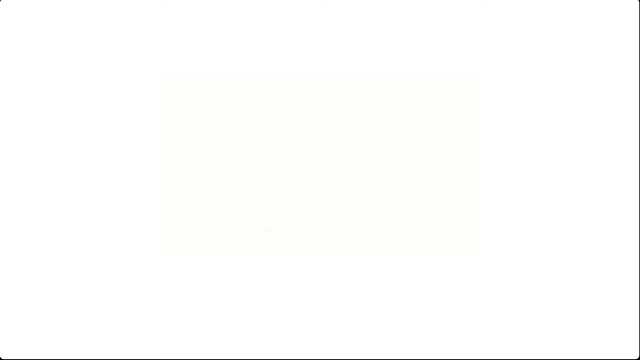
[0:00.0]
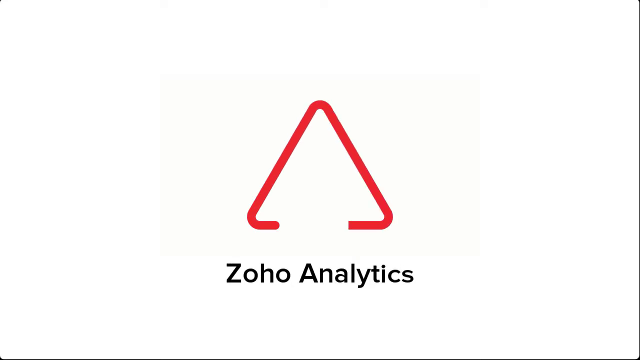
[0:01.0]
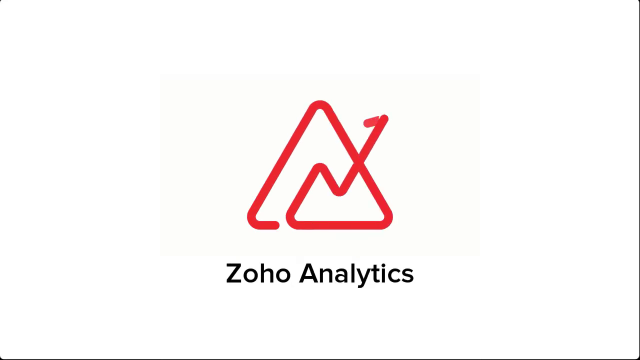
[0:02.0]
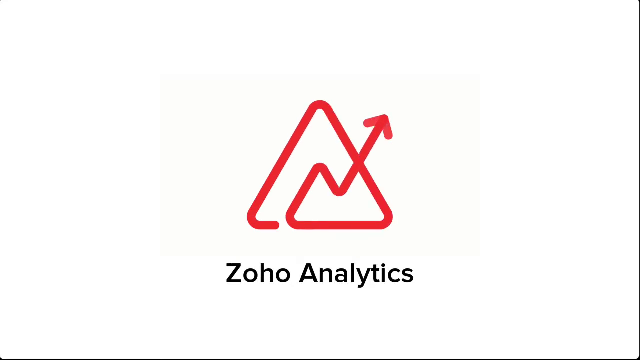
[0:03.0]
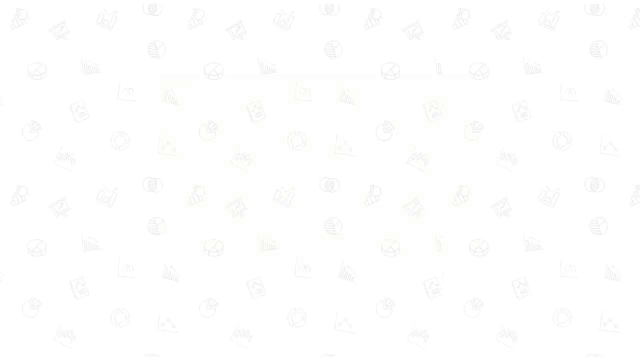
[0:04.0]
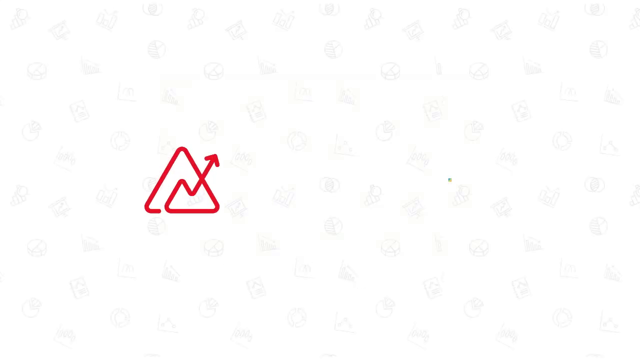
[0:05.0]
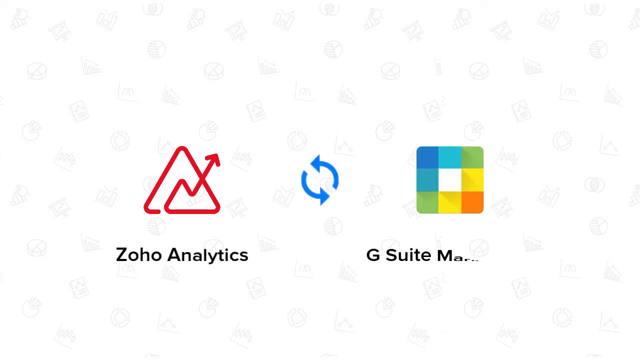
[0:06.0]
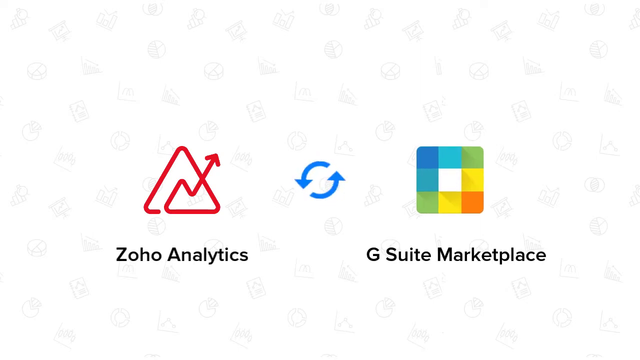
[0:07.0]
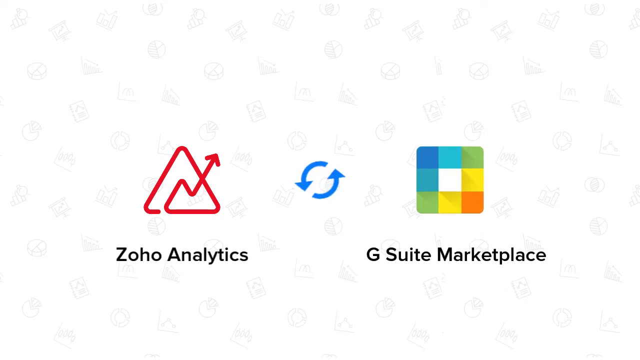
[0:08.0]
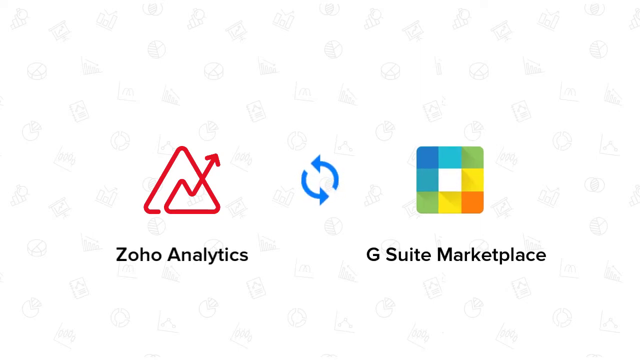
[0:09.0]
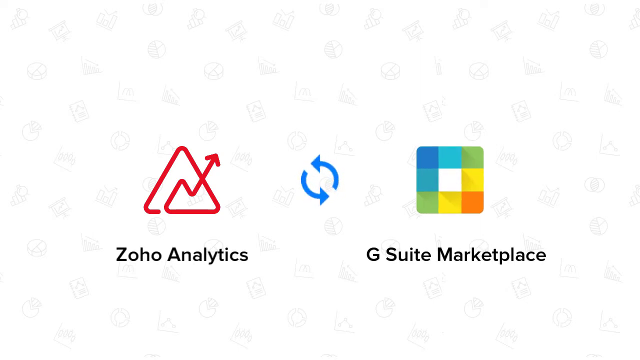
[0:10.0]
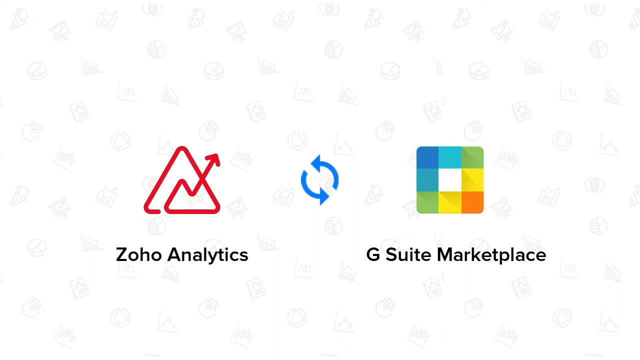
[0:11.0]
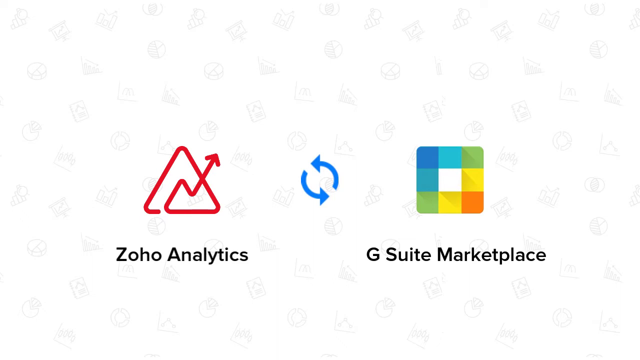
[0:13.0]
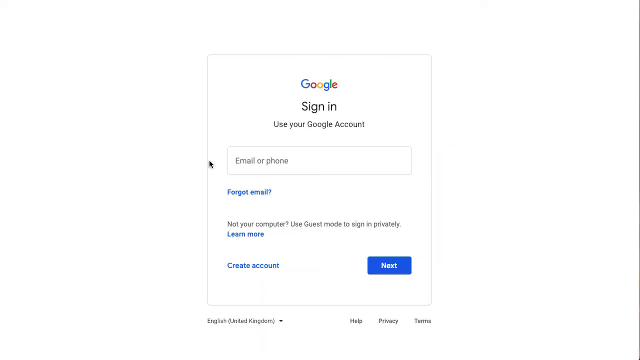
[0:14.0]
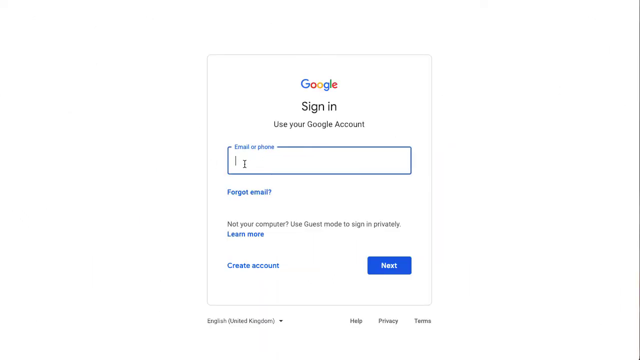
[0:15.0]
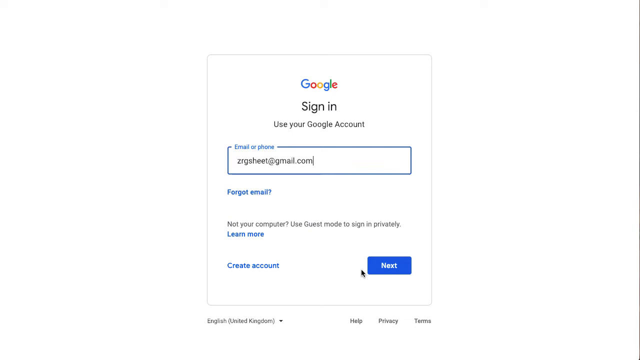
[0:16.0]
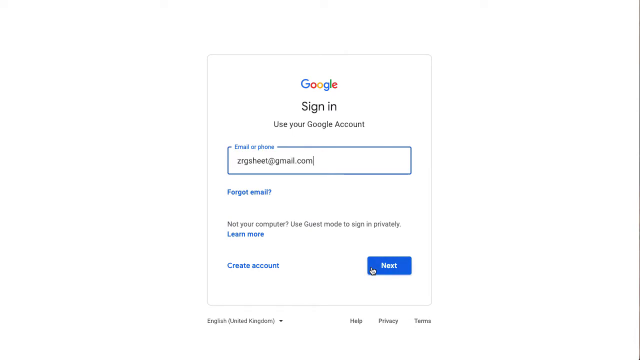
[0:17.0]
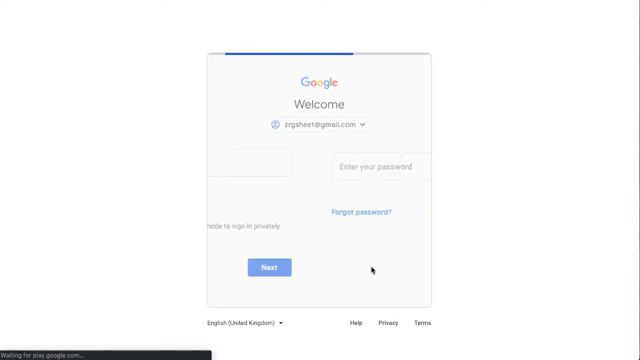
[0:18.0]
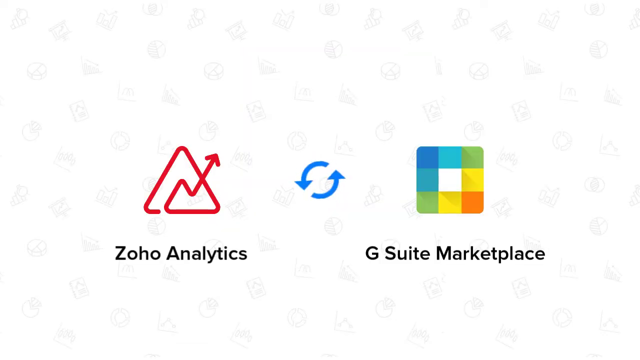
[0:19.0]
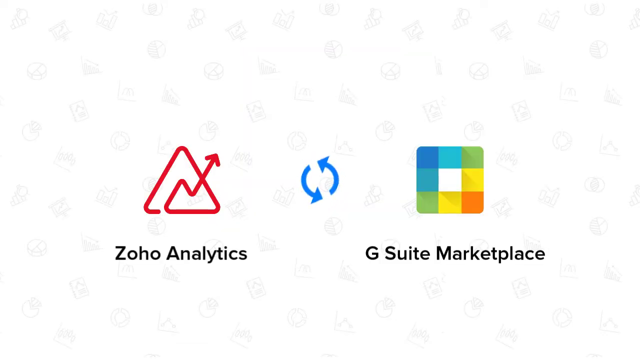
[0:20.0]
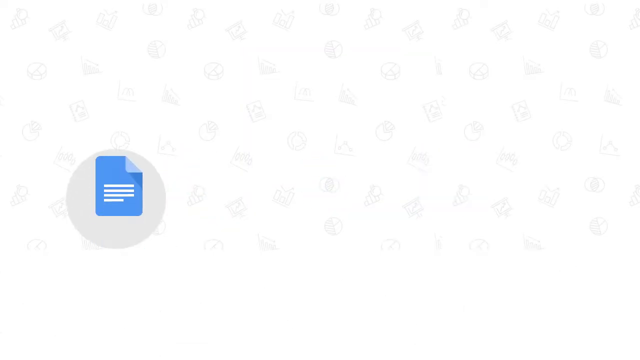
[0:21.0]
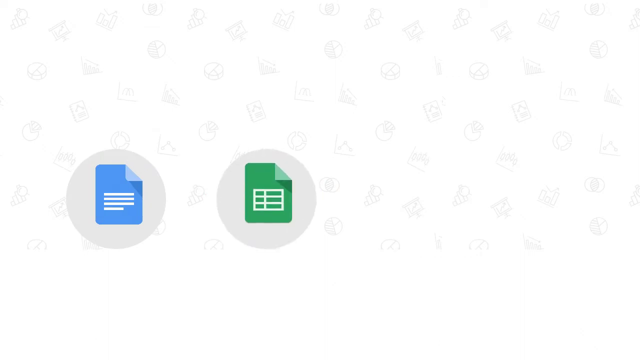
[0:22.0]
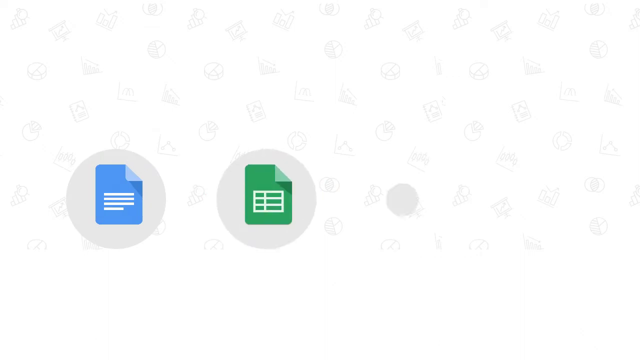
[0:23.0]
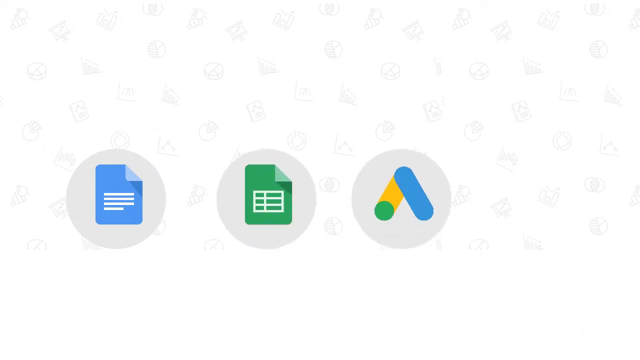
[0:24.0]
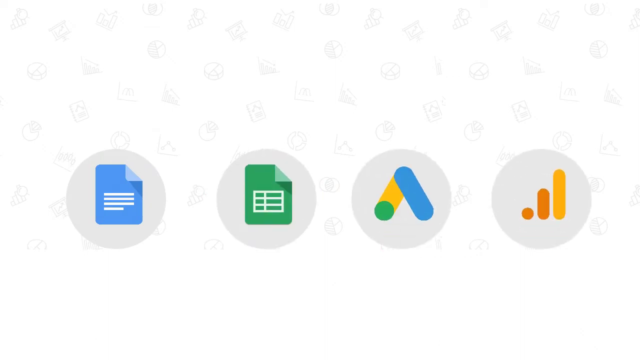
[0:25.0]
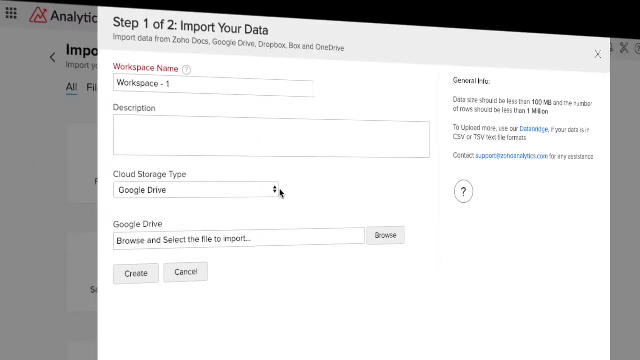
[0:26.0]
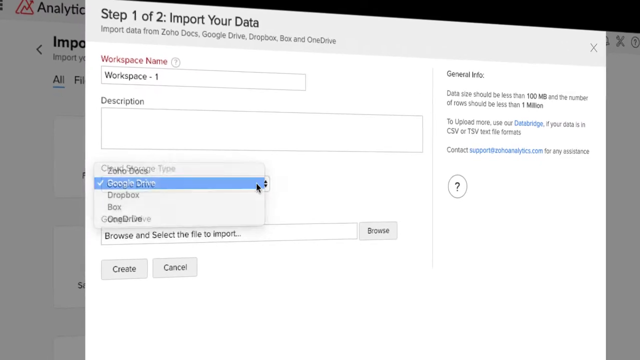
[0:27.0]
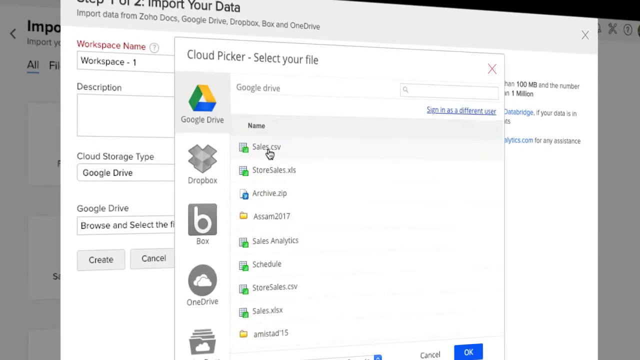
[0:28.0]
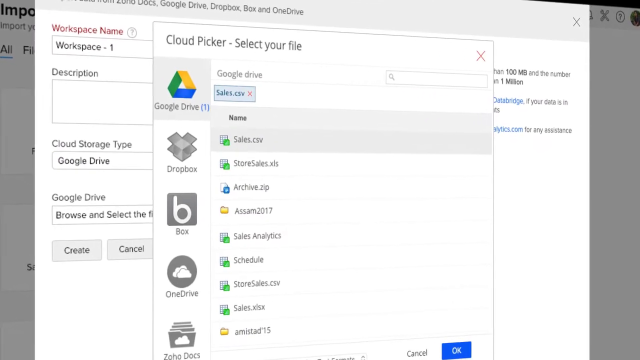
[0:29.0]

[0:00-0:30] An animated red triangle logo appears on screen along with the text "Zoho Analytics" and the company logo. Next, the same logo is shown alongside another logo, a grid of different colors, with "G Suite Marketplace" underneath in black text; between the two logos are a couple of blue arrows on a white background. A Google sign-in screen follows, with the Google logo at the top, the black text "sign in" and "use your Google account", and an email or phone box in blue. The person types in an email address and clicks the next button with the cursor. A loading screen appears, then the logos again, followed by some Google logos such as documents and Excel. Another screen reads "import your data" at the top, and the person chooses from a list of files. A window appears that says "Cloud Picker, select your file", with logos on the side for Google Drive, Dropbox, Box and OneDrive. The cursor hovers over some files and clicks one called "Sales".